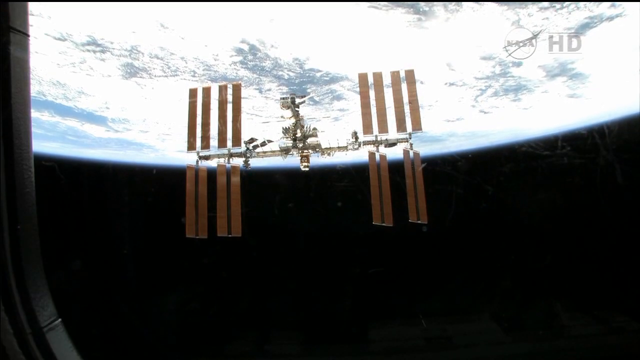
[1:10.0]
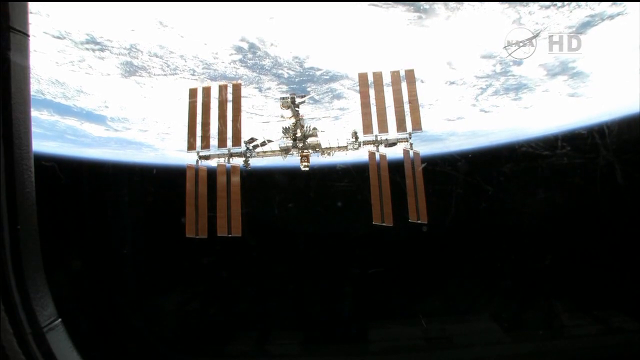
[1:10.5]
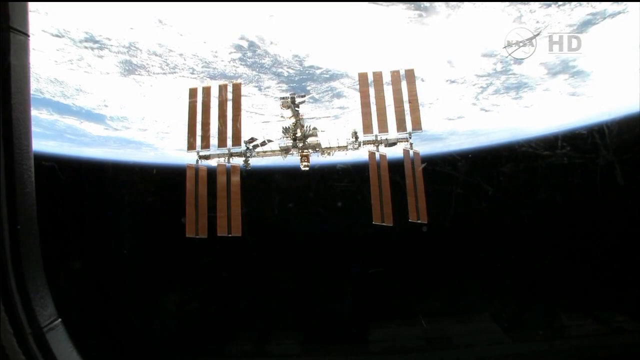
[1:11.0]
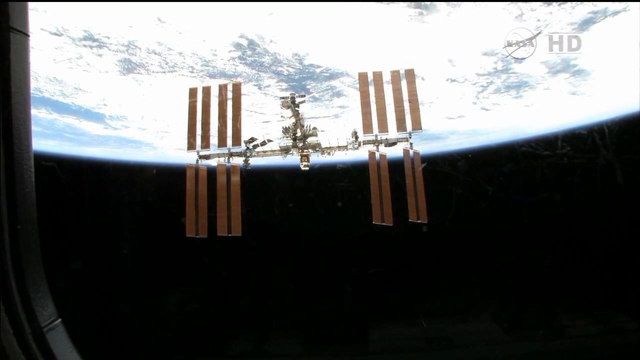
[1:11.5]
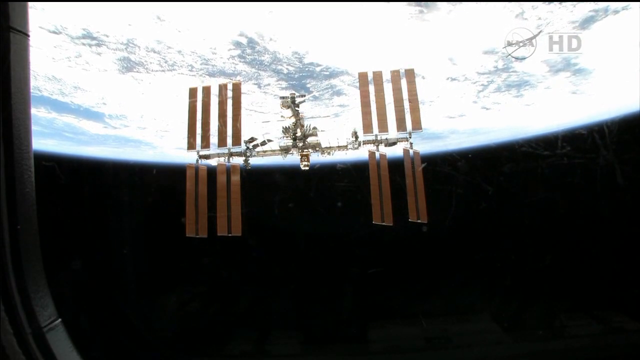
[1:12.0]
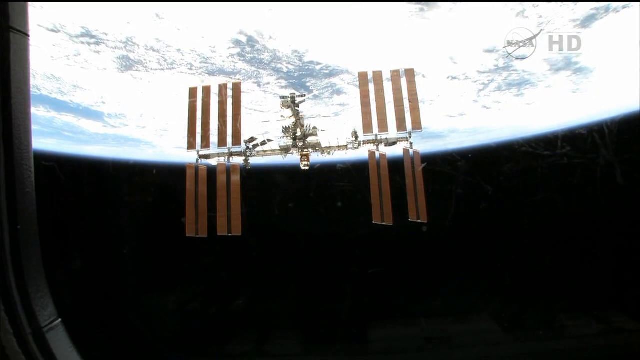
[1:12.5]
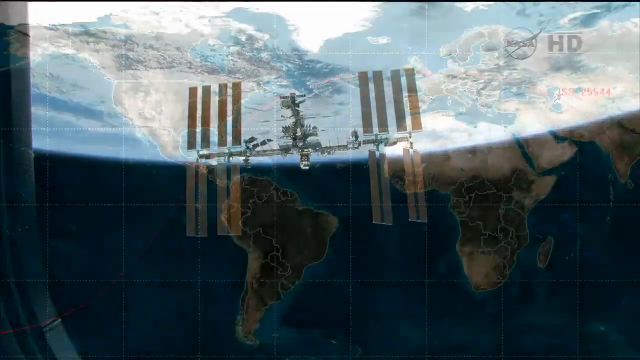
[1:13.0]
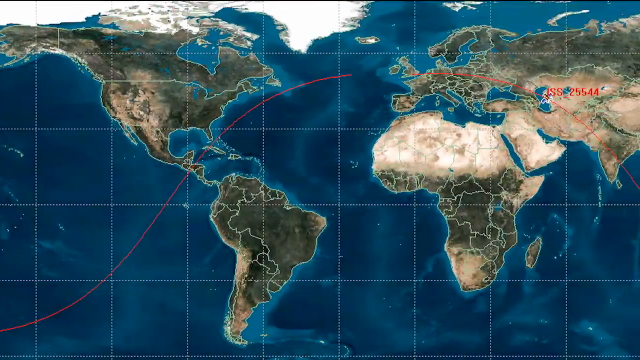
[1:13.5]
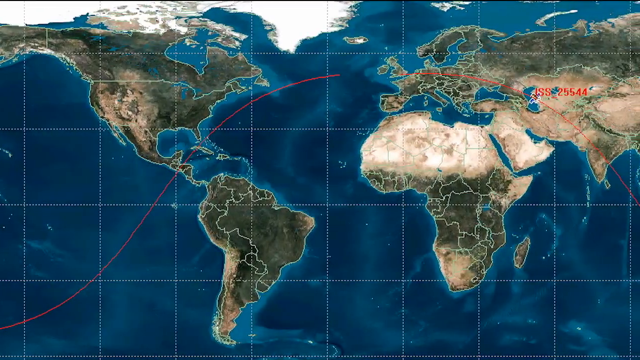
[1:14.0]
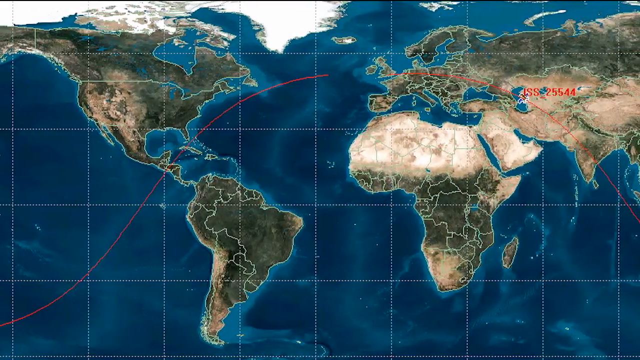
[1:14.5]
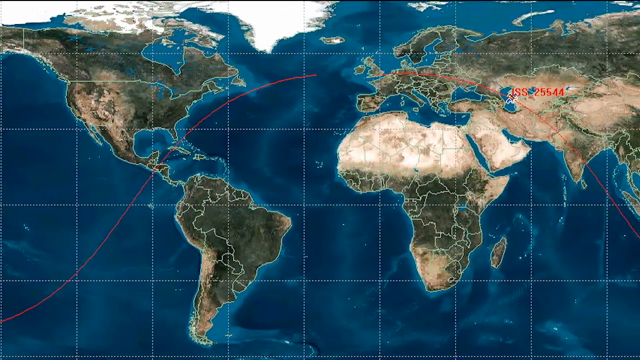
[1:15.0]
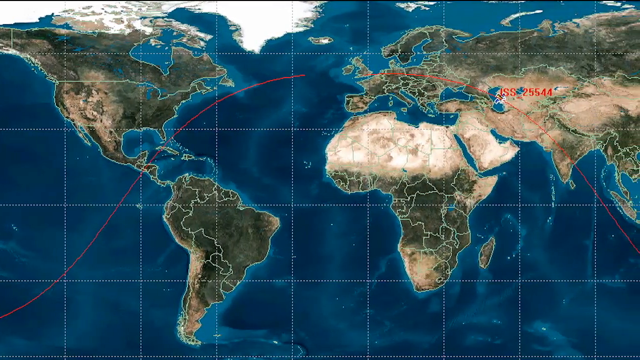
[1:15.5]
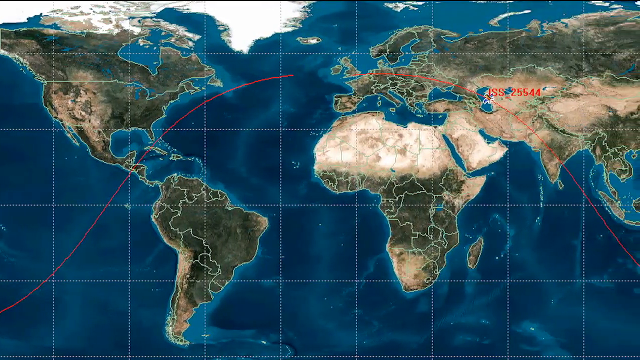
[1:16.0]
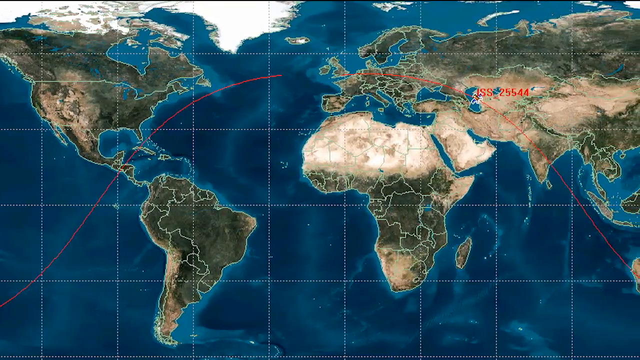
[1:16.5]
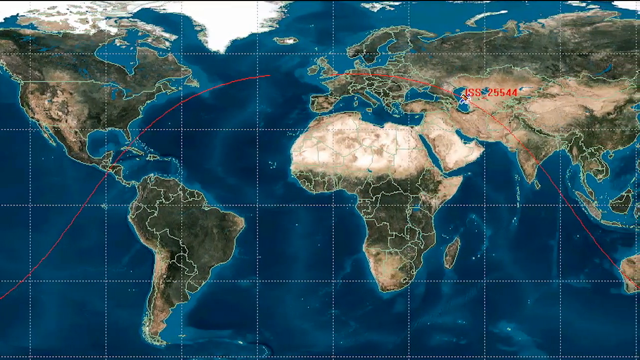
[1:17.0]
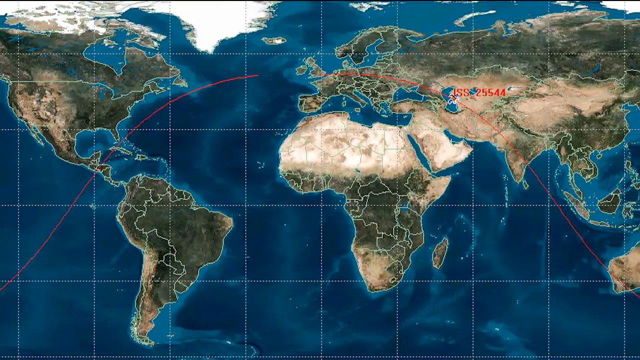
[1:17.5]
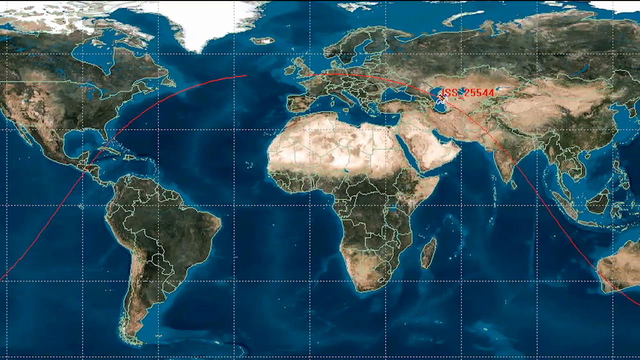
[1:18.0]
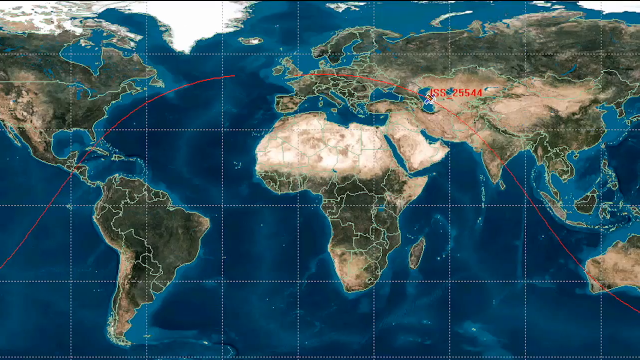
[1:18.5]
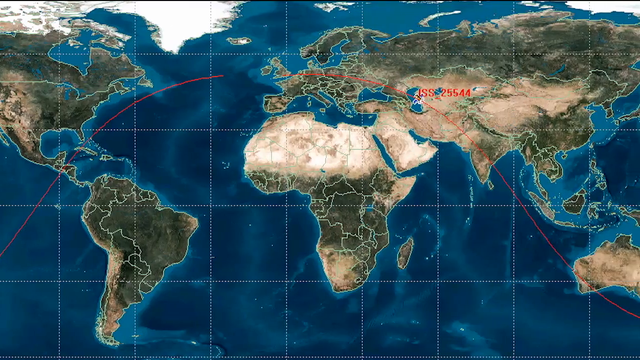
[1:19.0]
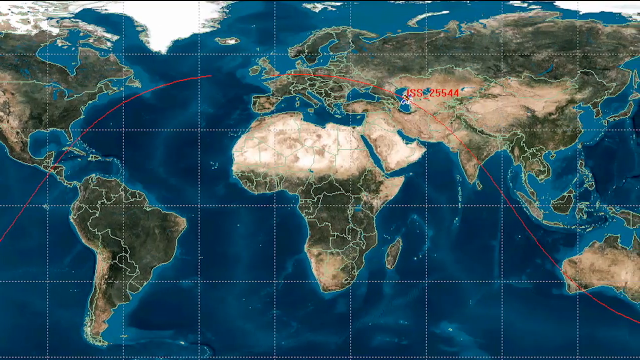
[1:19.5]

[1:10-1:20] Part of the Earth is visible from outer space at the top of the screen, slowly rotating, while the bottom of the screen is black. In the middle is a satellite with arms extending to the left and right, and at the end of each arm there are four panels. The scene cuts to a map showing all the countries, with a blue ocean and countries in green and brown. The view slowly pans from left to right, showing the United States, Canada and South America, then Russia, England, China and Australia, crossing over every country.